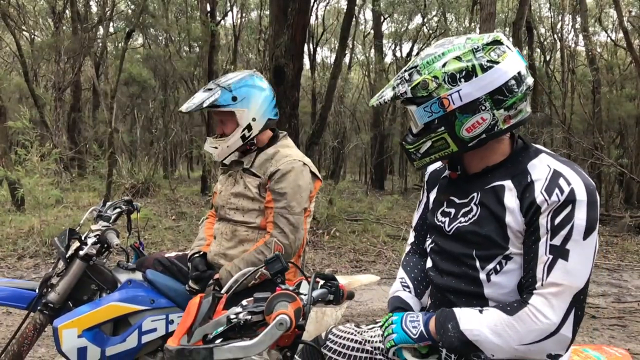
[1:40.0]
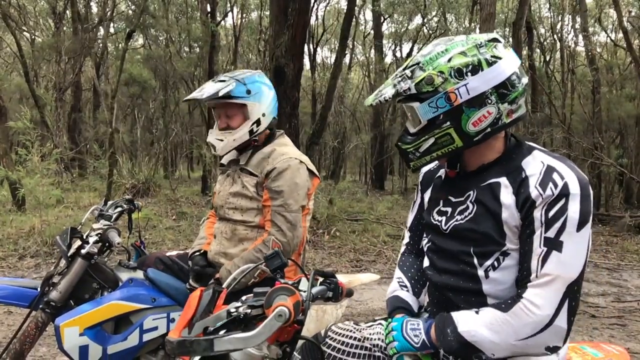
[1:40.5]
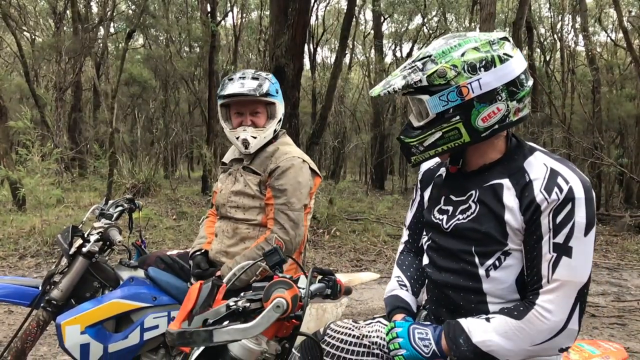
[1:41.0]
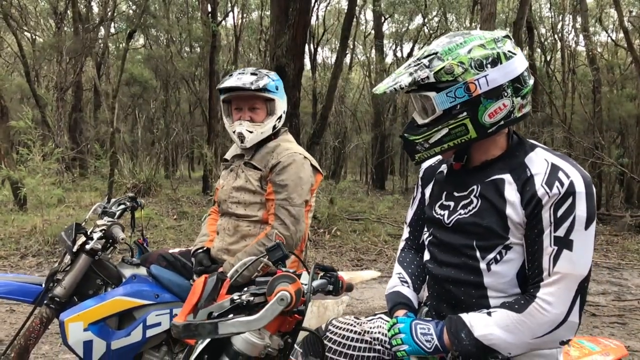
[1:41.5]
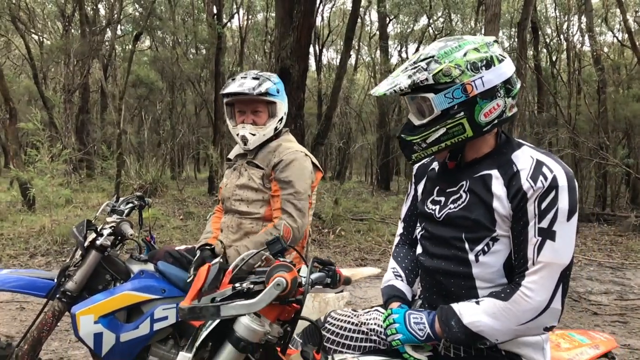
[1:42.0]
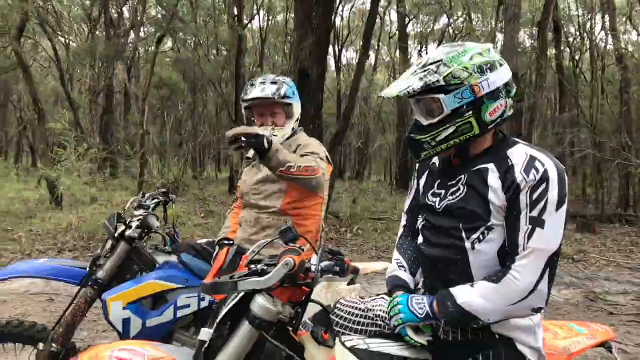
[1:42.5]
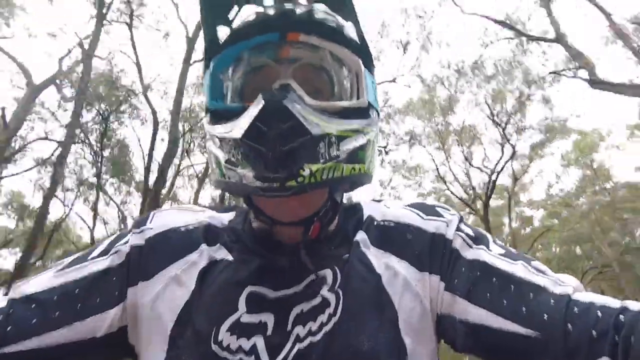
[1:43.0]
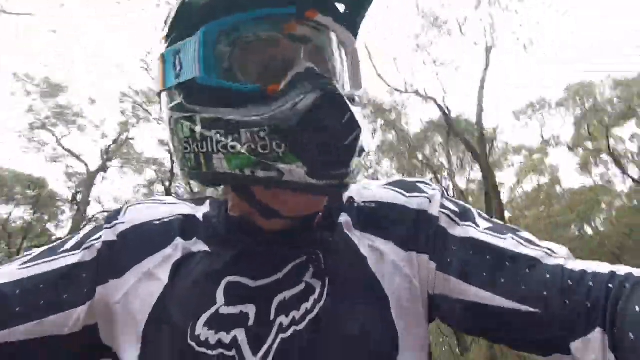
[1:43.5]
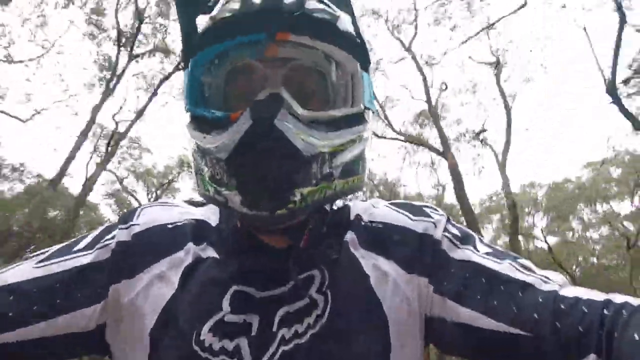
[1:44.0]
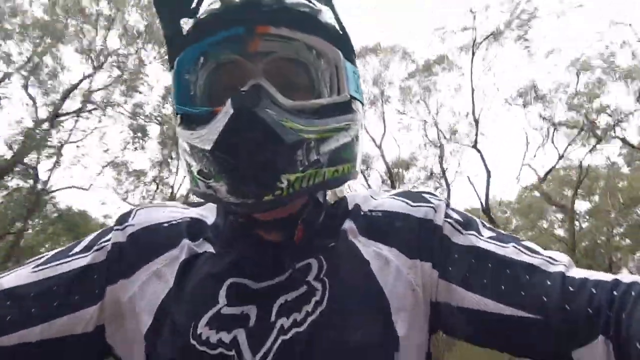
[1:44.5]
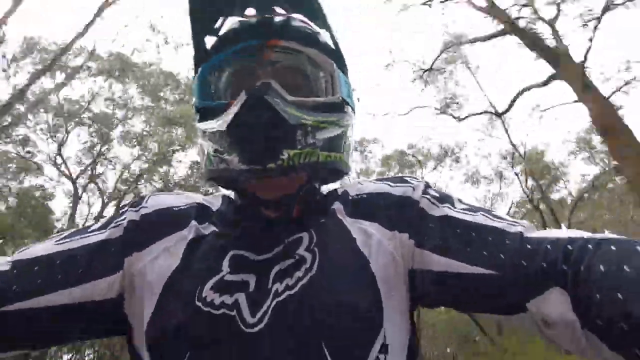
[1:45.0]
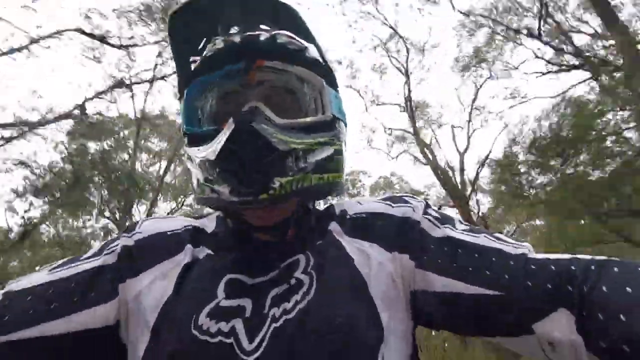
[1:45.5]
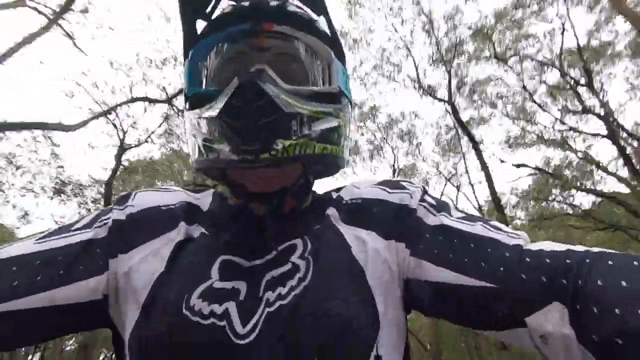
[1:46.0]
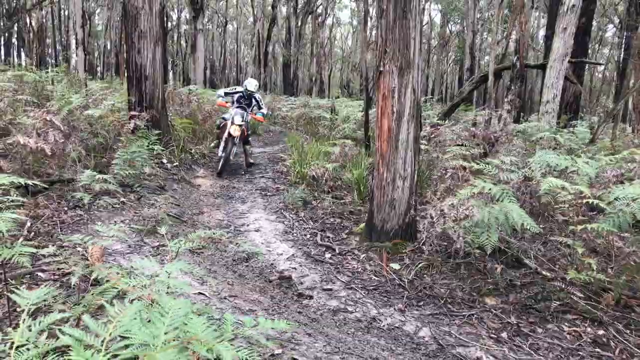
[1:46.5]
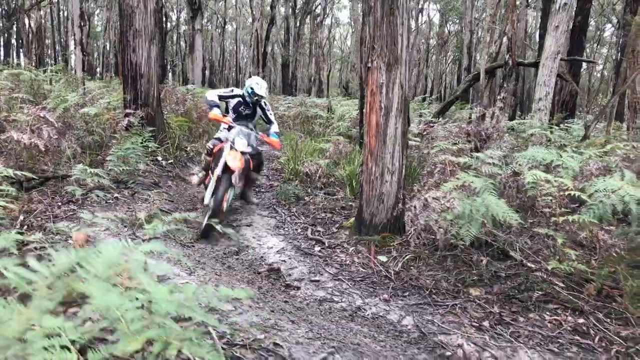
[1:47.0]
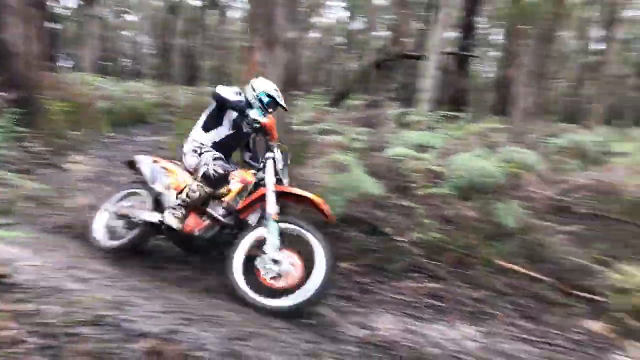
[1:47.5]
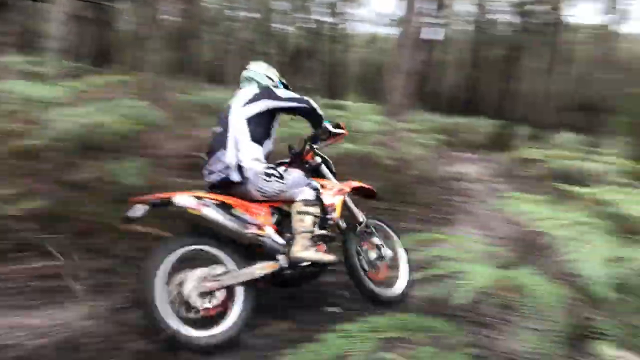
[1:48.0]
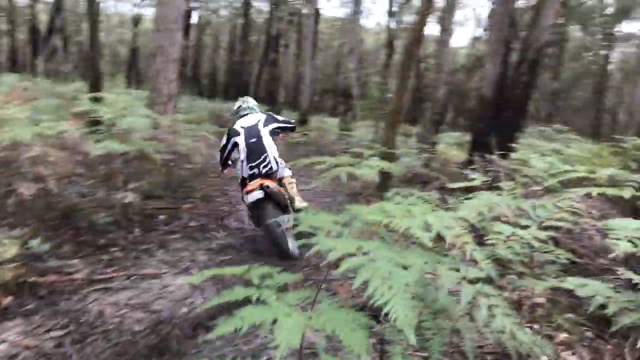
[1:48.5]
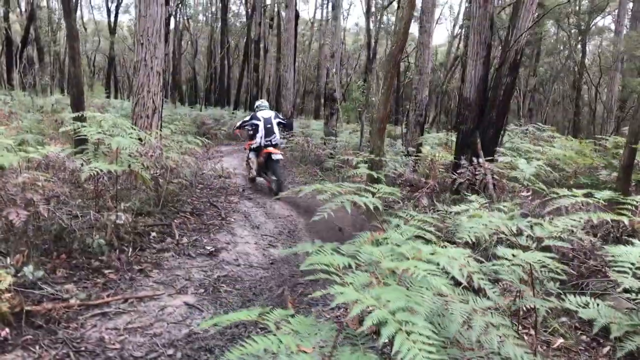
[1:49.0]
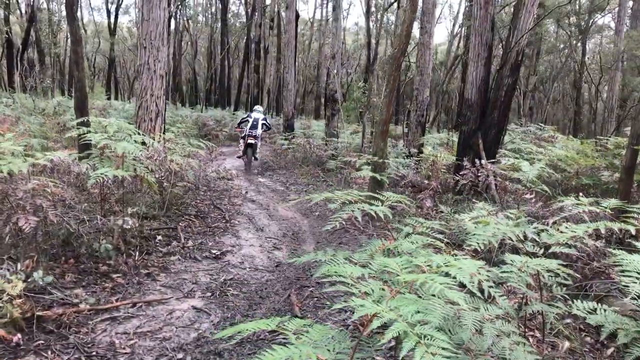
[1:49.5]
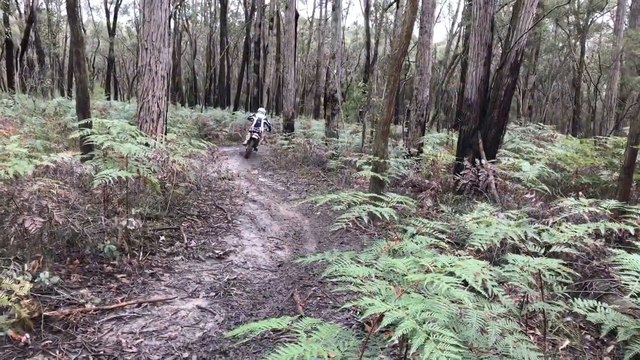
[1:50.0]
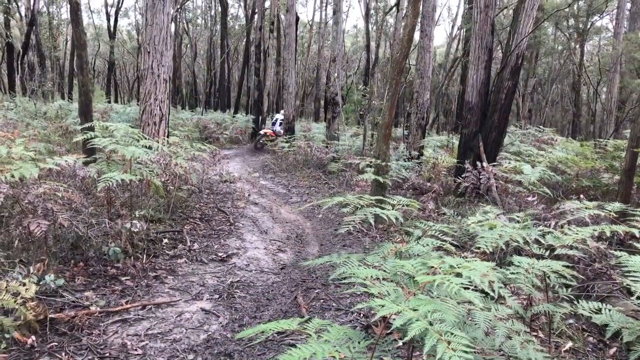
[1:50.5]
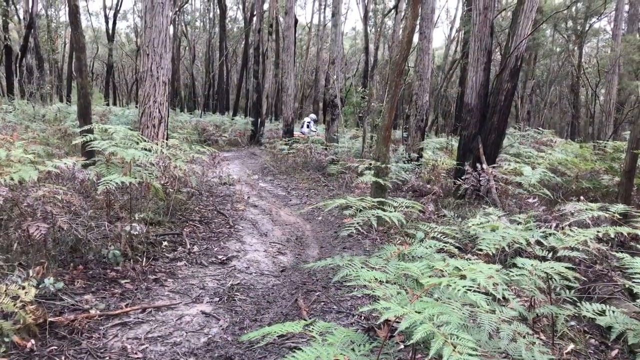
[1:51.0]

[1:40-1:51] One rider on a dirt bike rides through a muddy trail, and another rider on a dirt bike appears behind them. In the next scene the two riders are on two dirt bikes, one wearing goggles and the other not, both in motorcycle helmets and attire and fully gloved. A close-up follows of him riding his dirt bike in the muddy forest with the goggles on and a full outfit. The video ends as he turns around a corner in the wet, muddy woods; he is the same rider seen at the start.